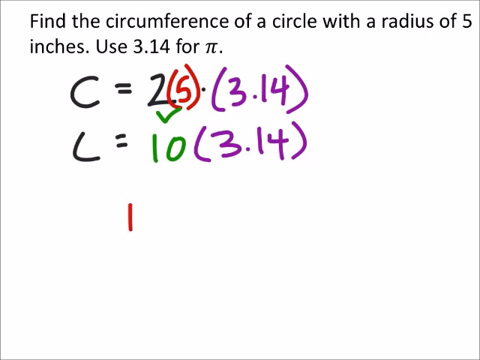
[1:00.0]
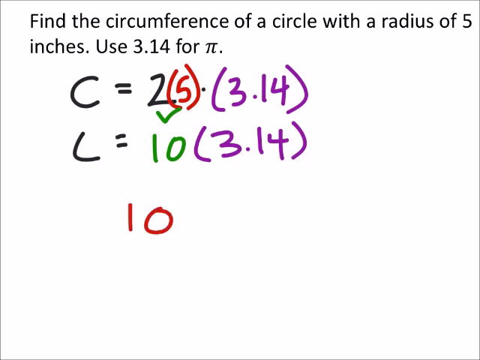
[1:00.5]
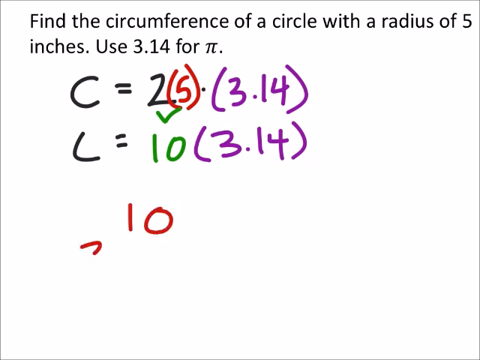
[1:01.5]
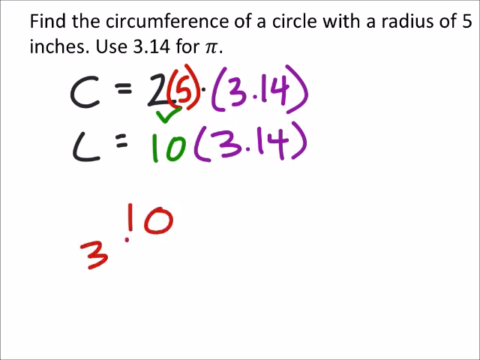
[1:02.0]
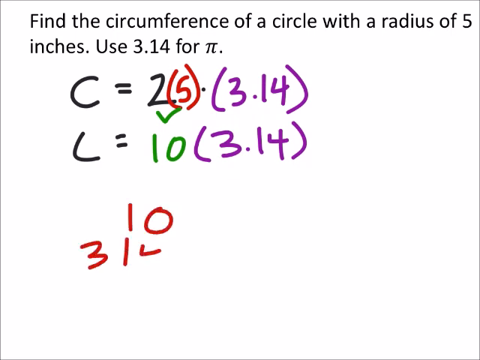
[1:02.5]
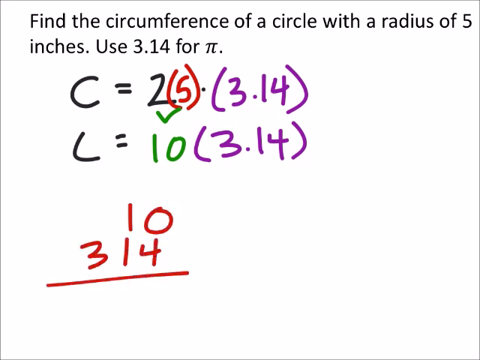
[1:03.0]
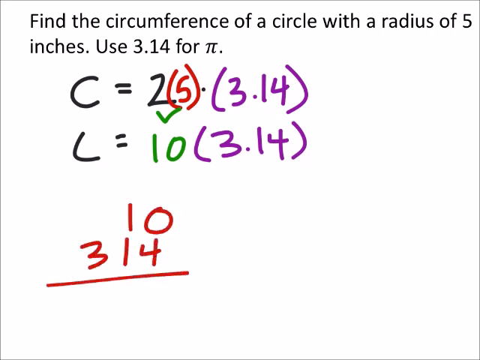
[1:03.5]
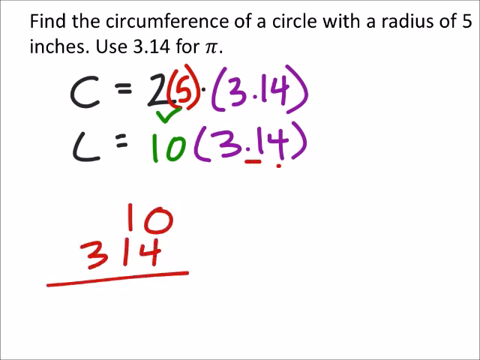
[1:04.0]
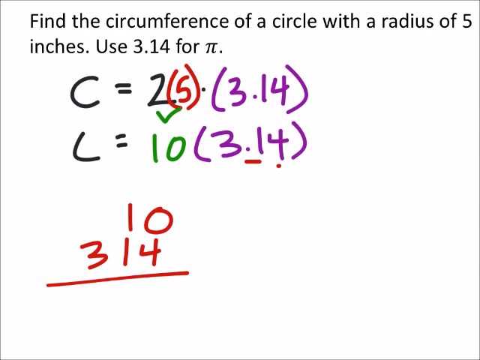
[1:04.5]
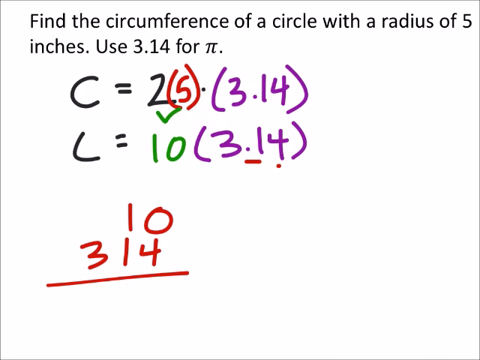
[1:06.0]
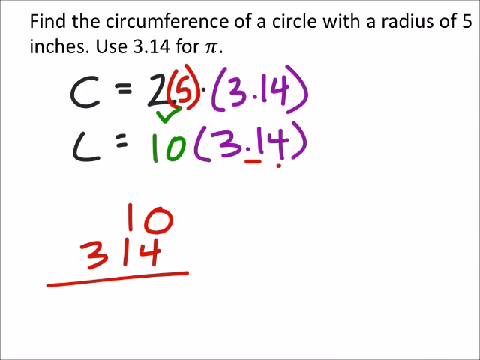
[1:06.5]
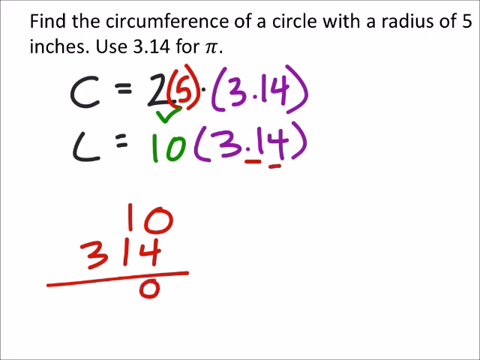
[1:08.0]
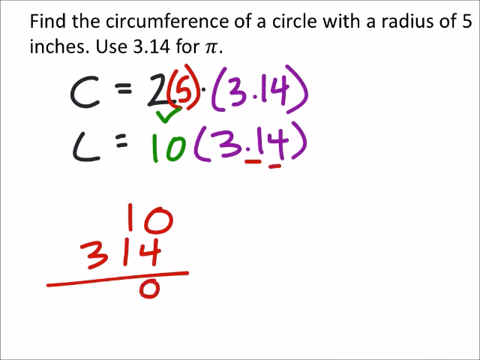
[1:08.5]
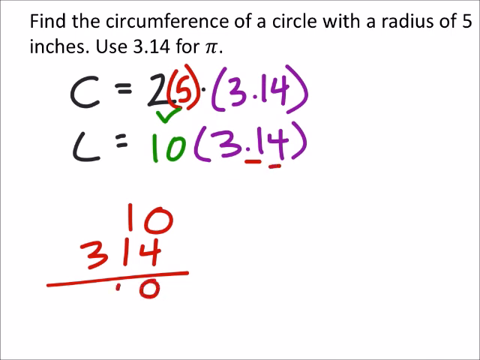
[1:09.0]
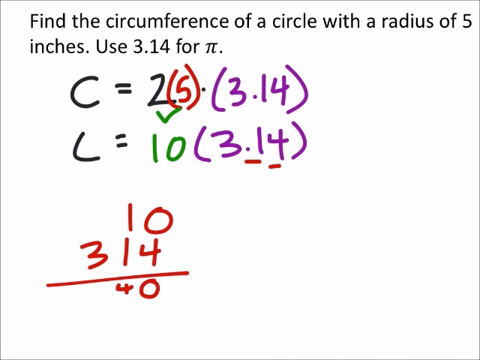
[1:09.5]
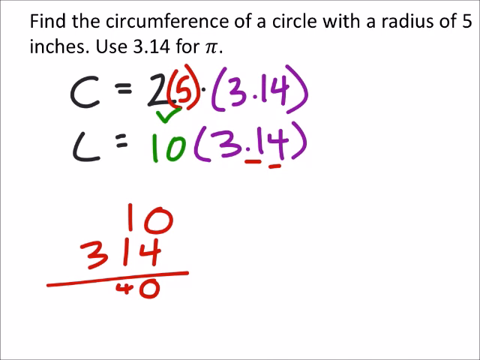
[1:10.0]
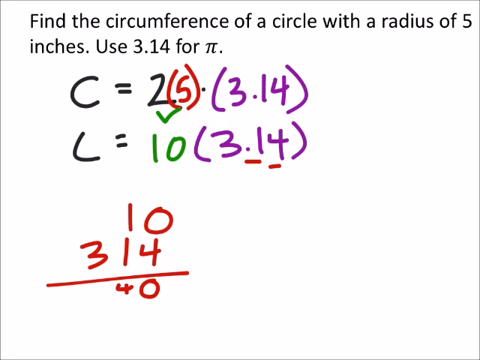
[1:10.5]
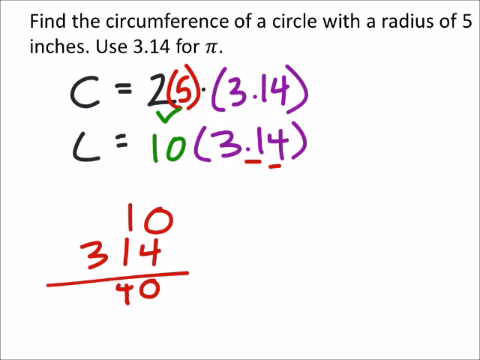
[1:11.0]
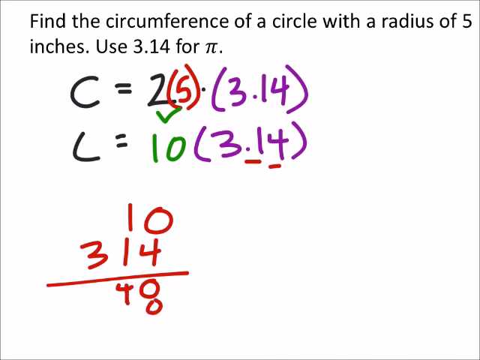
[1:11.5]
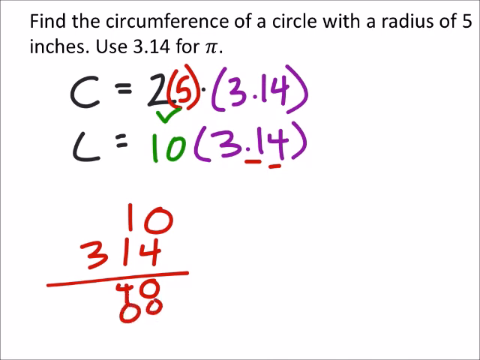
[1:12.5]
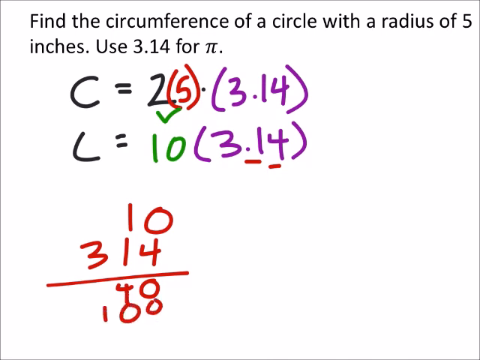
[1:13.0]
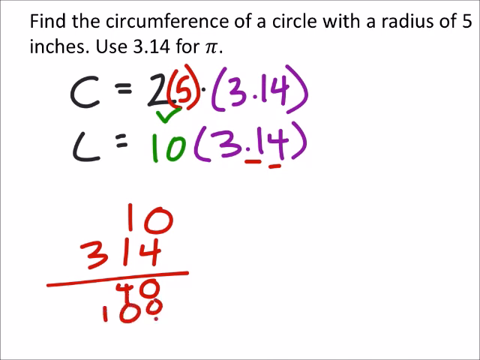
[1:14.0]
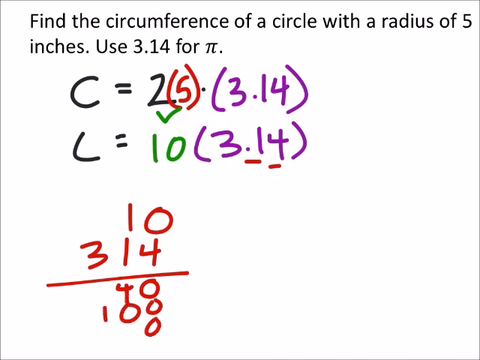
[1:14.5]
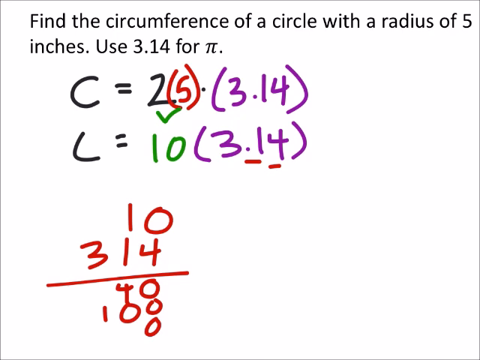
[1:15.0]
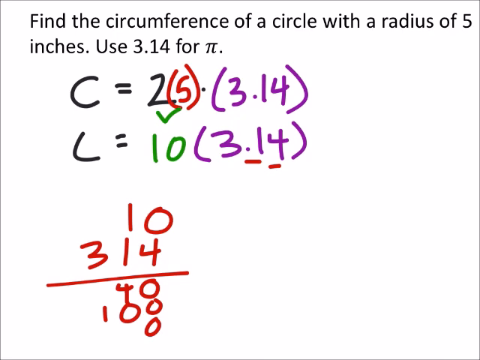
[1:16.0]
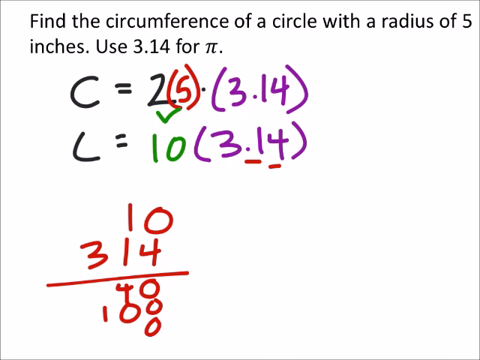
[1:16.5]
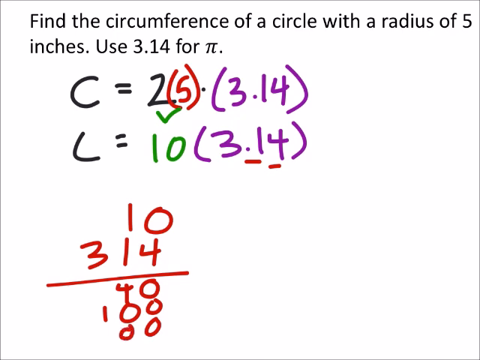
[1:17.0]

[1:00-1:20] Printed text across the top reads "find the circumference of a circle with a radius of five inches. Use 3.14 for pi." The working has been written in various coloured pens, as if by hand. The first line reads, in black, "C = 2", then in red "(5)", a point, then in purple "(3.14)". Below that, in black, it reads "C =", then in green "10", then in purple "(3.14)". Below the number 2, a green V-shaped arrow points down at the number 10. Red underlining is under the second purple 3.14. Below that, red handwriting appears, reading 10 and underneath it 3.14, followed by a horizontal line. Numbers appear below the line: 40, then 100, then 000.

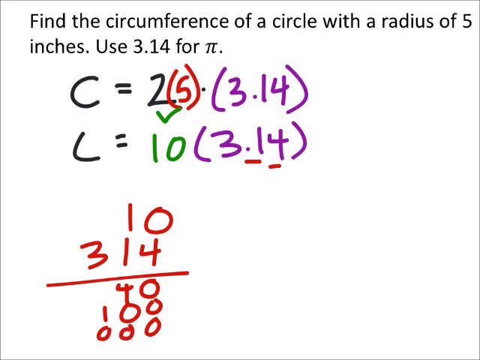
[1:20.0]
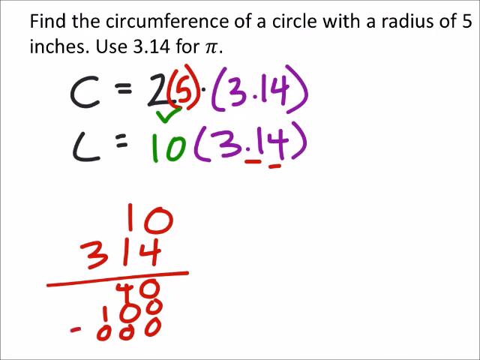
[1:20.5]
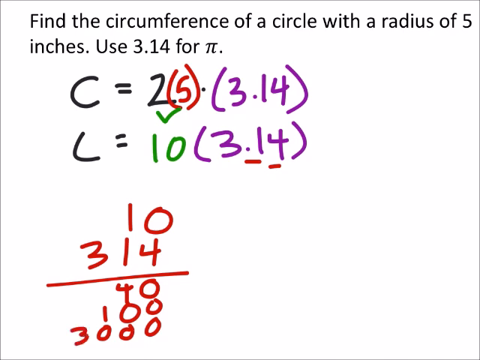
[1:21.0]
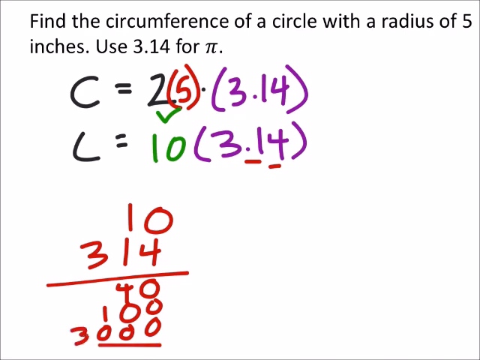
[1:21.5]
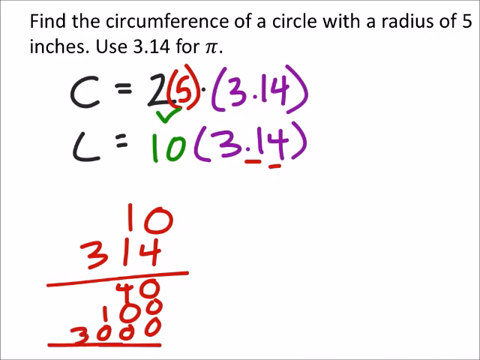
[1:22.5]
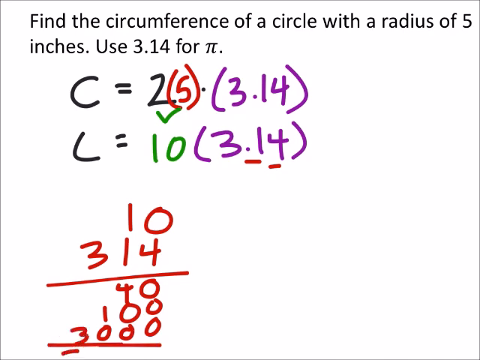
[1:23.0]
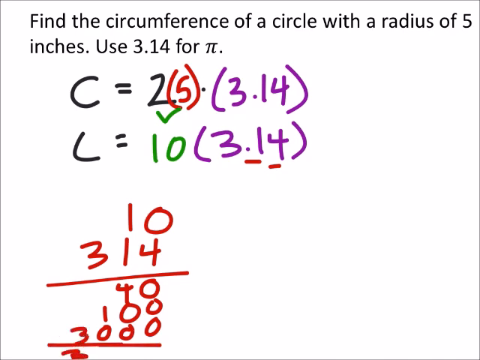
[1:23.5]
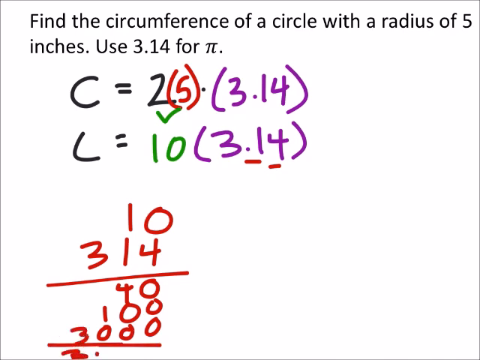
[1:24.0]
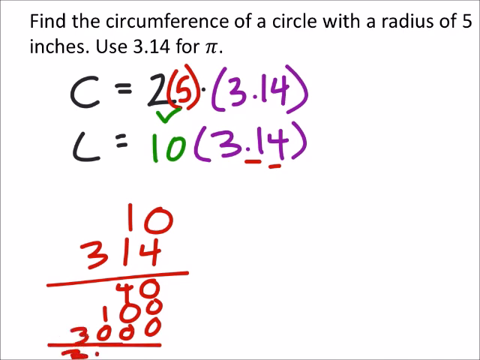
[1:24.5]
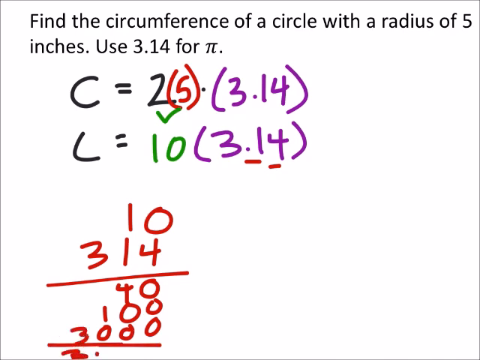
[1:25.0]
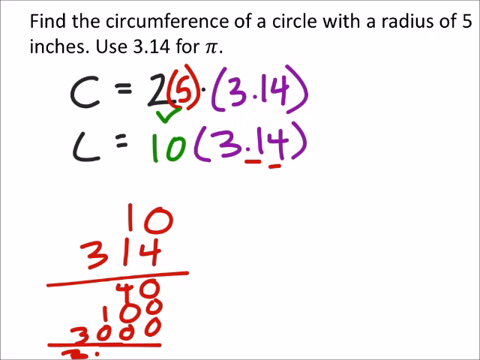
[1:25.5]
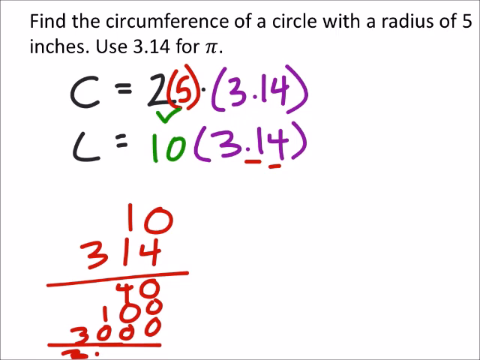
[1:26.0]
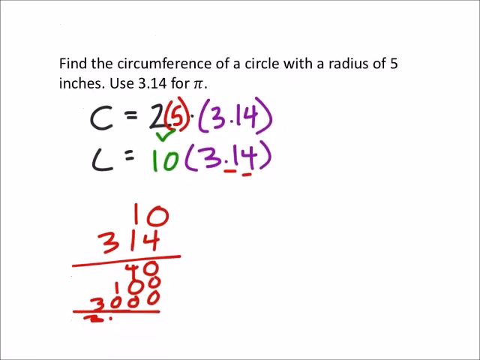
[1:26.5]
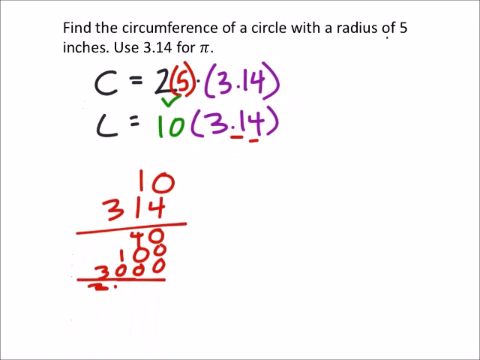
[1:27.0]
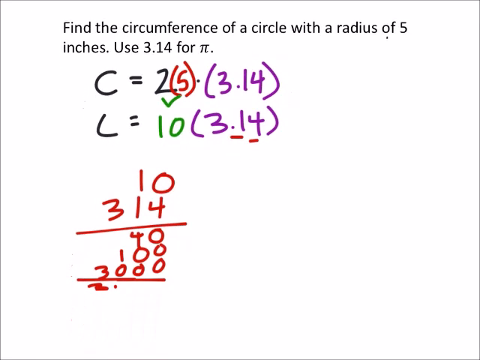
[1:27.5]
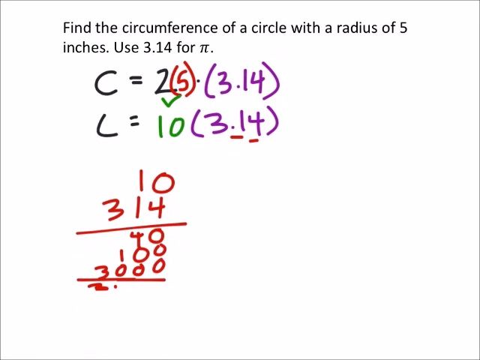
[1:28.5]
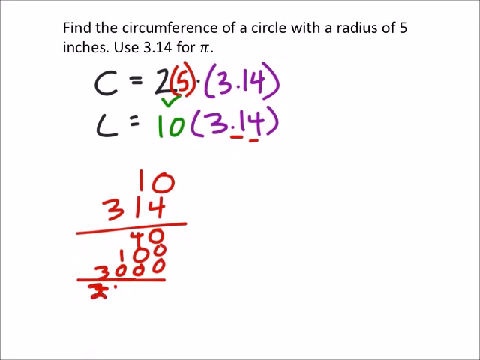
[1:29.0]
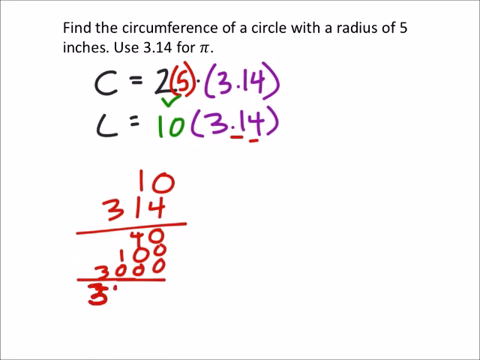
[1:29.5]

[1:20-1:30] The text across the top reads "find the circumference of a circle with a radius of 5 inches, use 3.14 for pi." Underneath, in black, red, purple and green pen, a hand has been writing out the working of the problem. In the lower left side of the screen, a sum is worked out in red pen: a vertical list of numbers reading 10, then 314, a horizontal line, then 40, 100 and 3000. Under 3000 is another horizontal line, and below it a new number is being written, though it is not clear what it says.